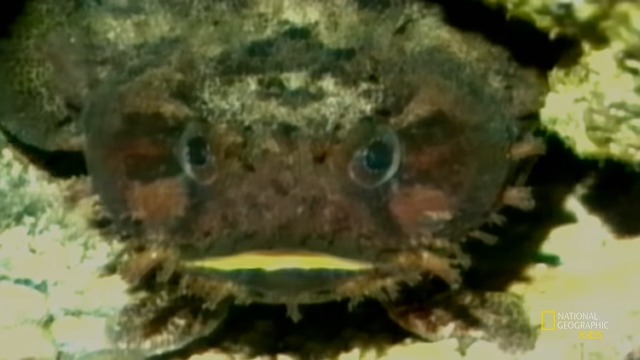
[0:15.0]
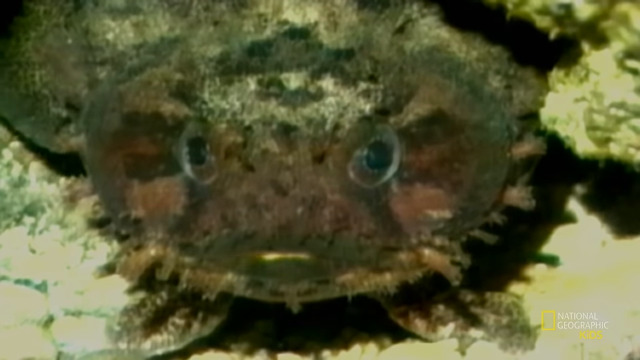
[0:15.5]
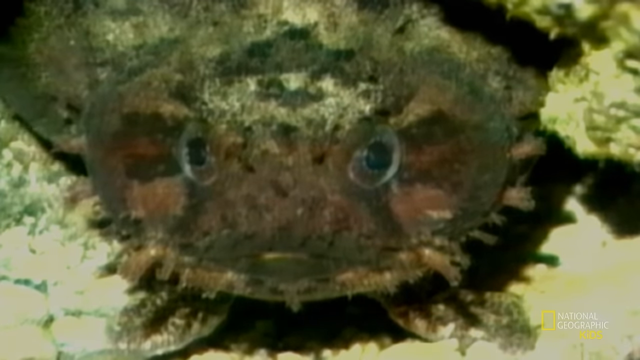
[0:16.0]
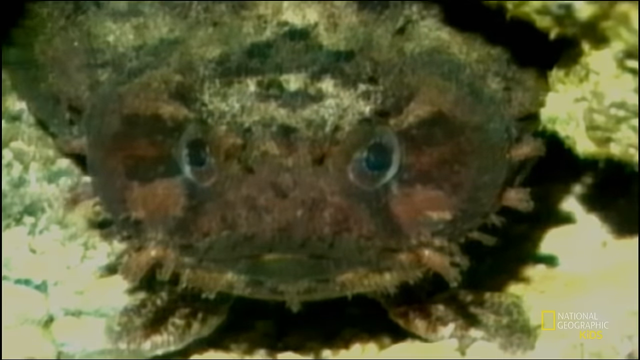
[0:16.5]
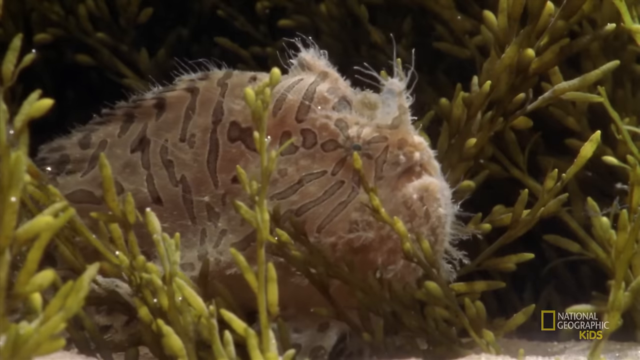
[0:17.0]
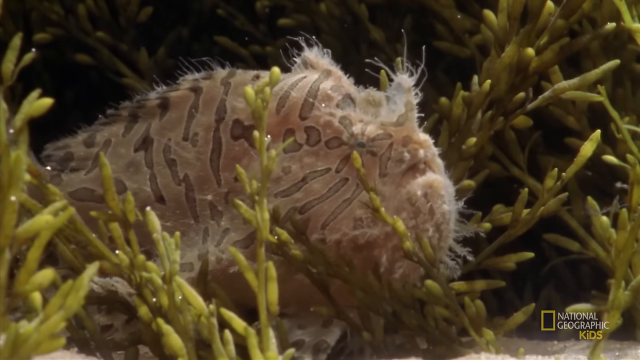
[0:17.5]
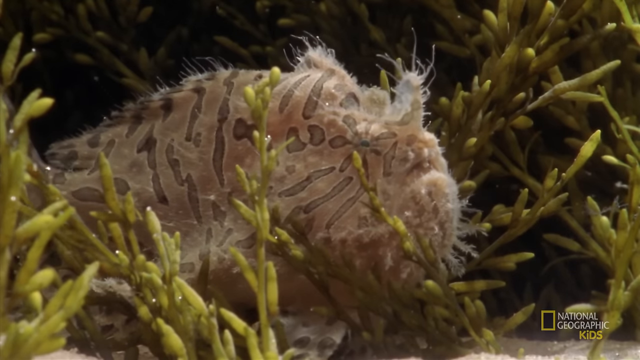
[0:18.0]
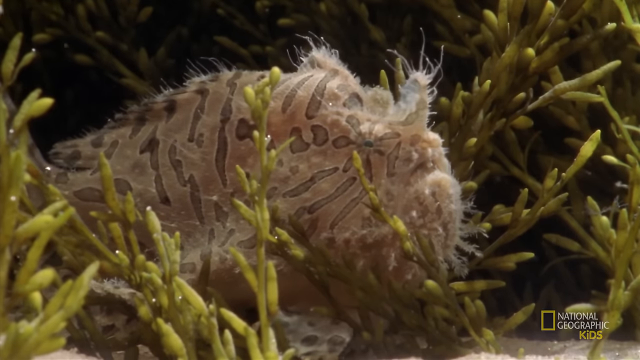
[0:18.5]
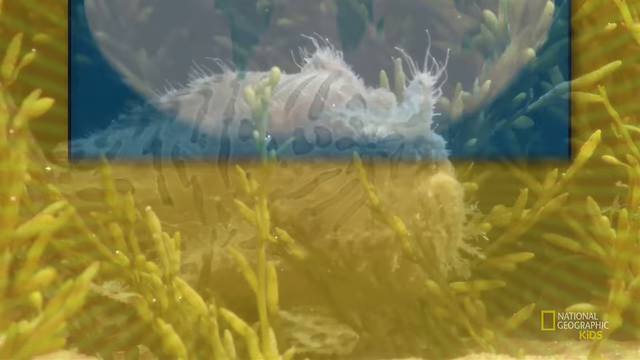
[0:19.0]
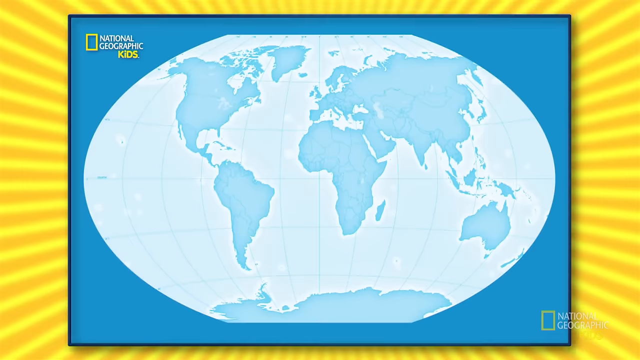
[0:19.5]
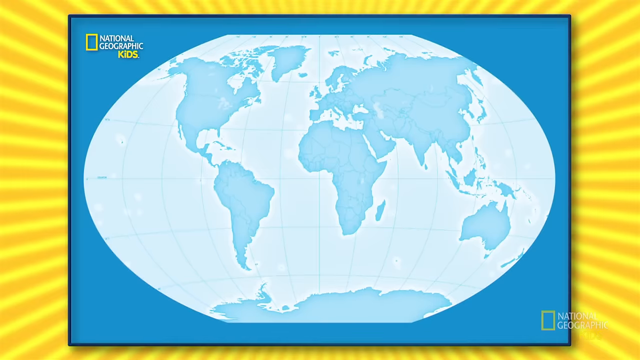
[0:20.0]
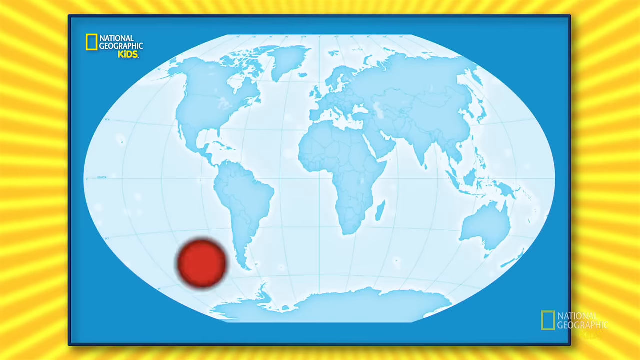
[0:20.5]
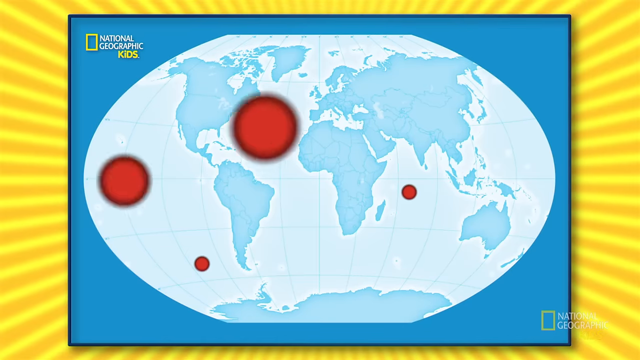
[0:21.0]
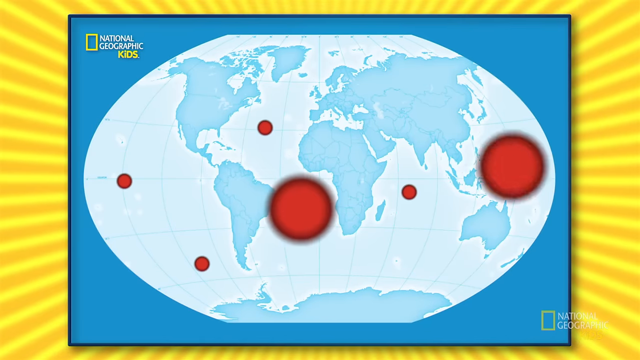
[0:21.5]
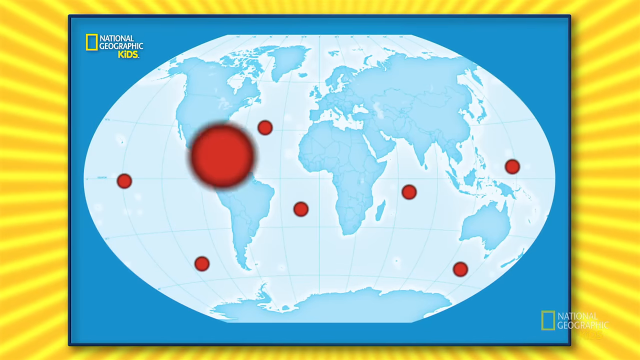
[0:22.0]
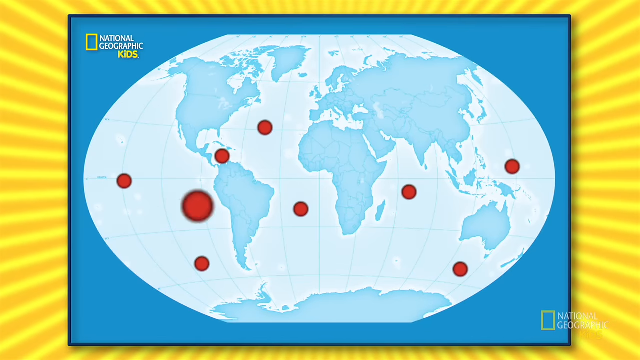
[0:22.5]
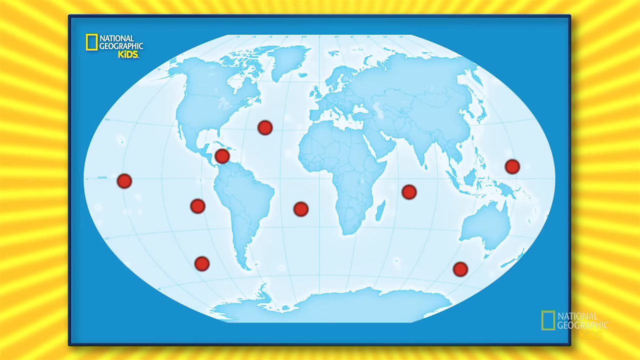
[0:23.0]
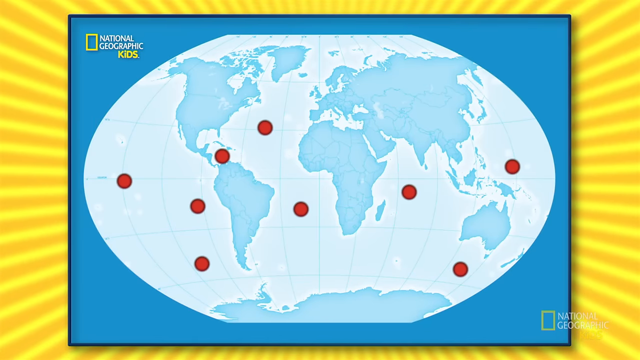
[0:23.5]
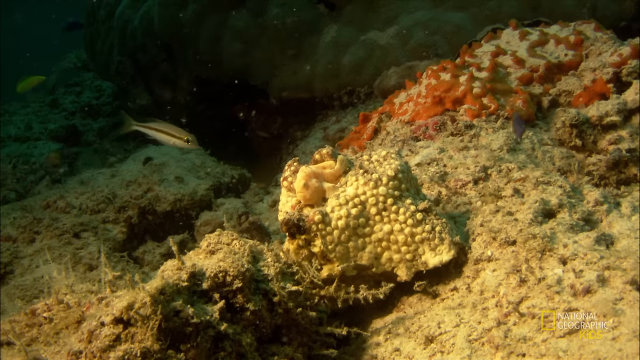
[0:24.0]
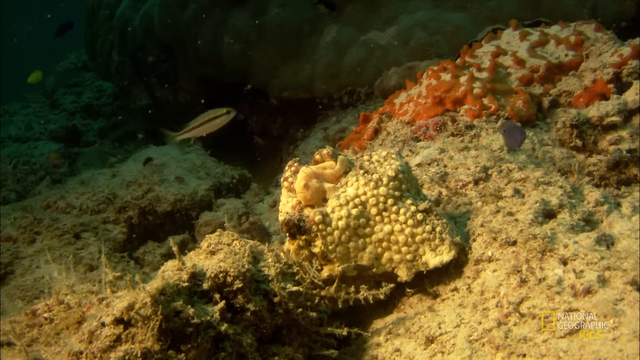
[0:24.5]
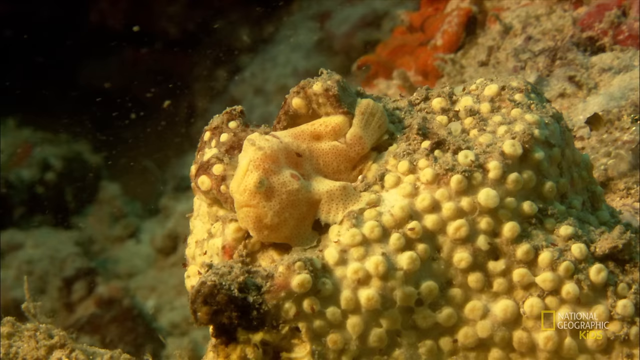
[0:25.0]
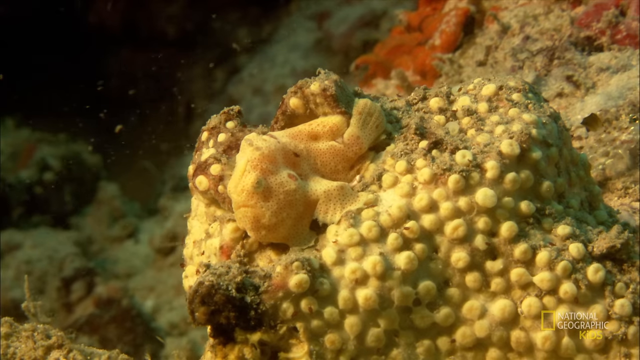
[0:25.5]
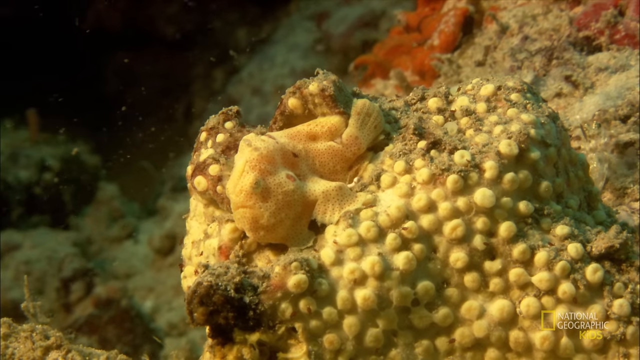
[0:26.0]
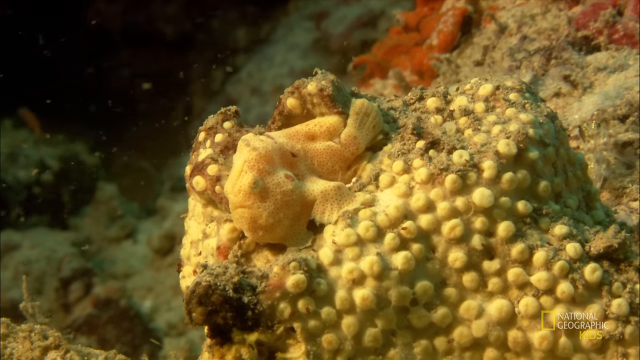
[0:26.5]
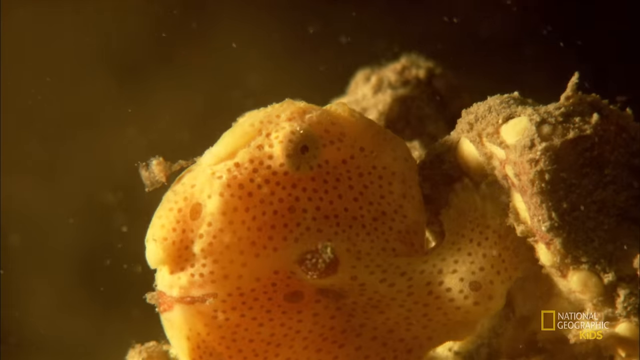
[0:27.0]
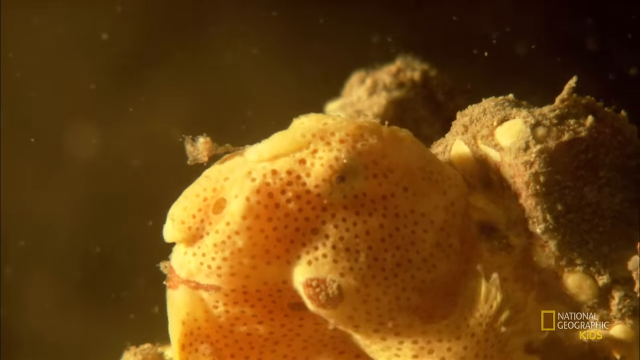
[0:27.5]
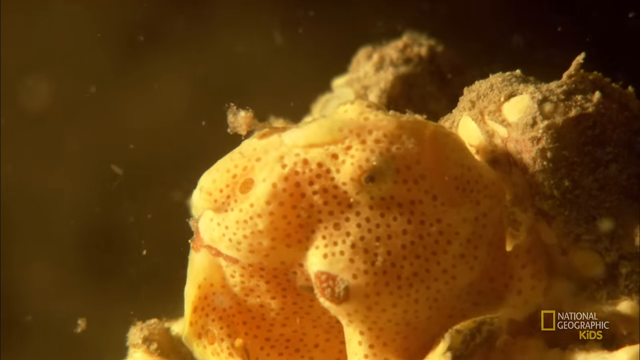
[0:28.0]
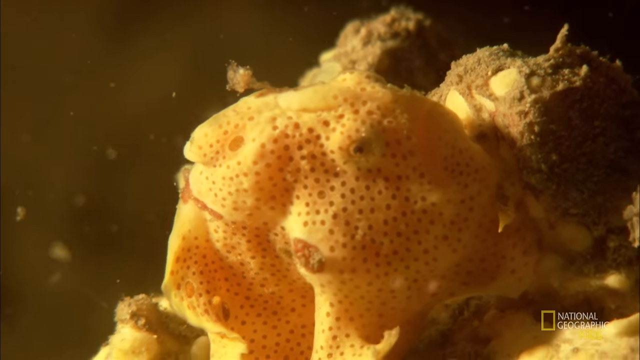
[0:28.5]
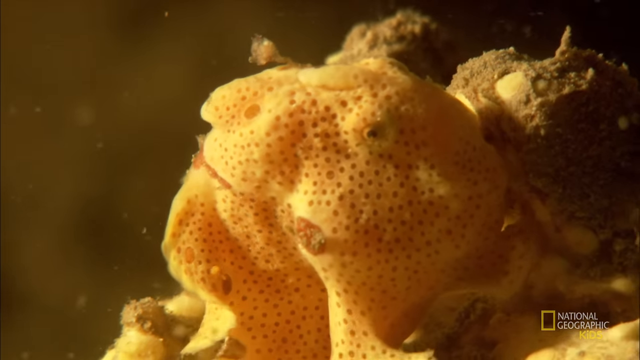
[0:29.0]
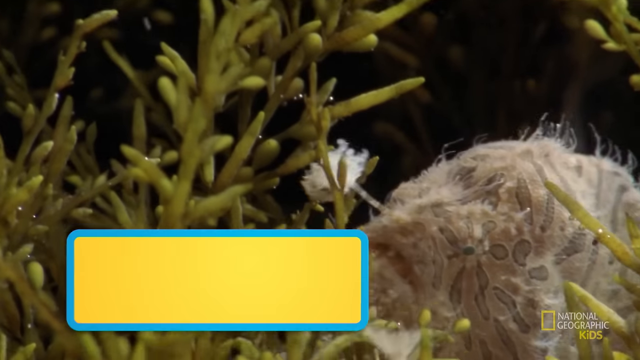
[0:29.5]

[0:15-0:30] The frogfish's face is shown up close, and it is not very pleasant. The video then cuts to footage of another, unidentified fish. Next, a world map appears with red points marking where the frogfish can be found: around the Pacific Ocean, in the middle of the Atlantic Ocean, around the Gulf of Mexico, in the middle between South America and Africa, in the middle of the Indian Ocean, next to Indonesia, and south of Australia. The video then cuts to another fish that does not seem to be a frogfish, though it may be one.